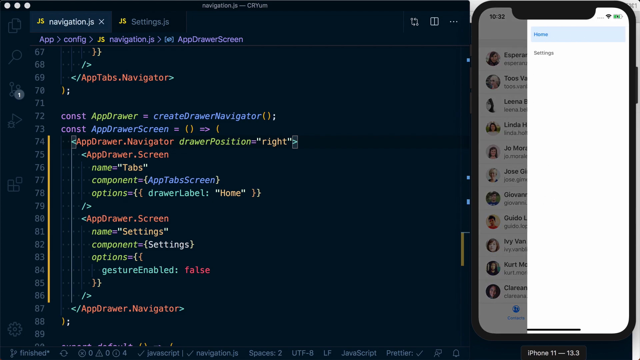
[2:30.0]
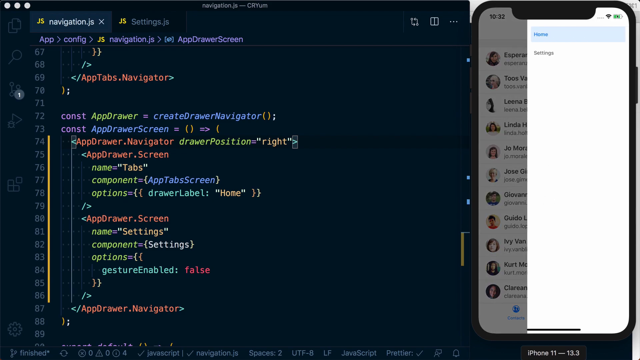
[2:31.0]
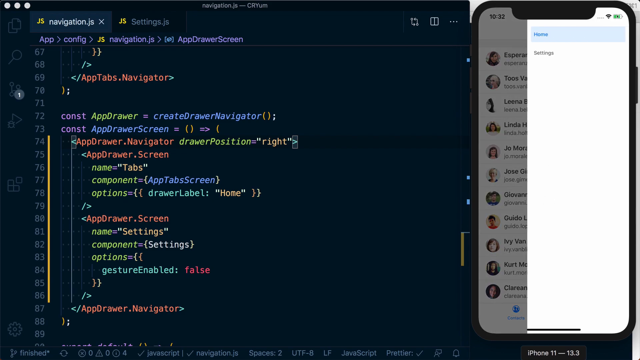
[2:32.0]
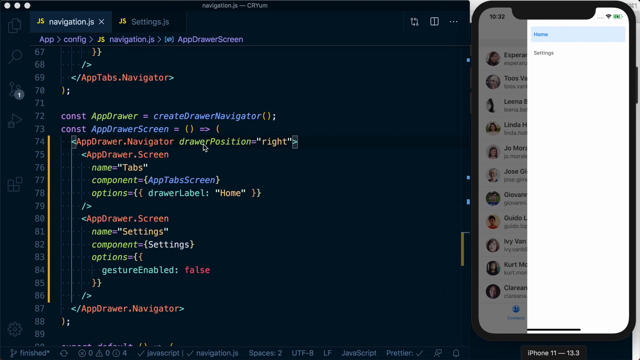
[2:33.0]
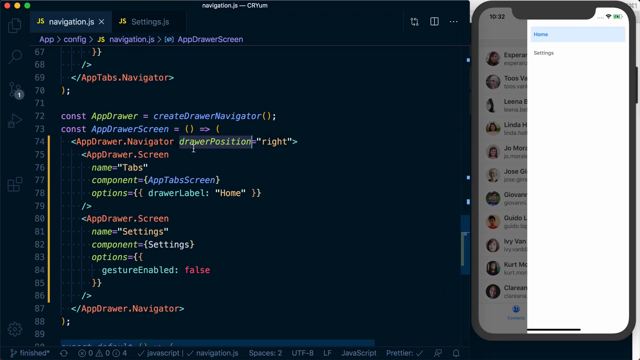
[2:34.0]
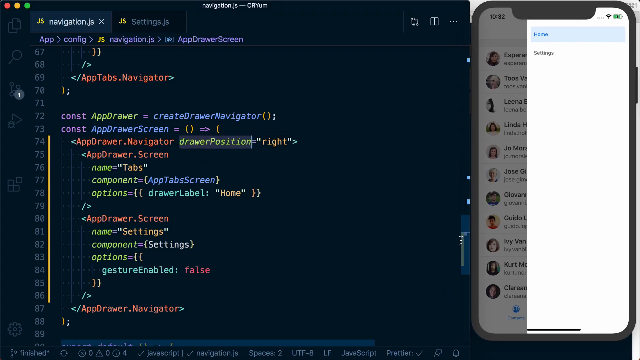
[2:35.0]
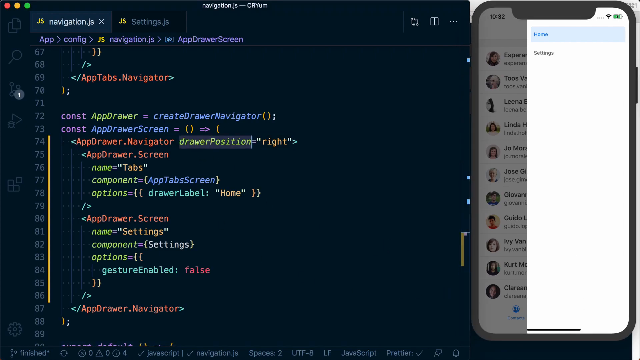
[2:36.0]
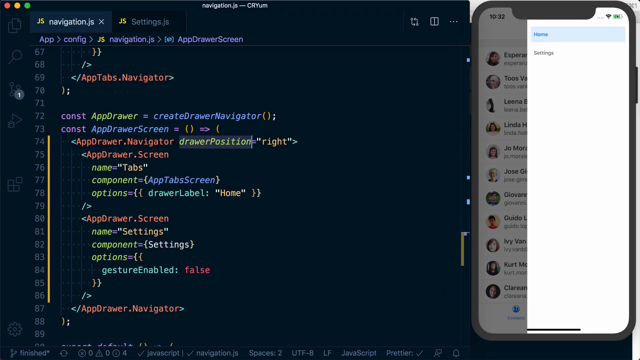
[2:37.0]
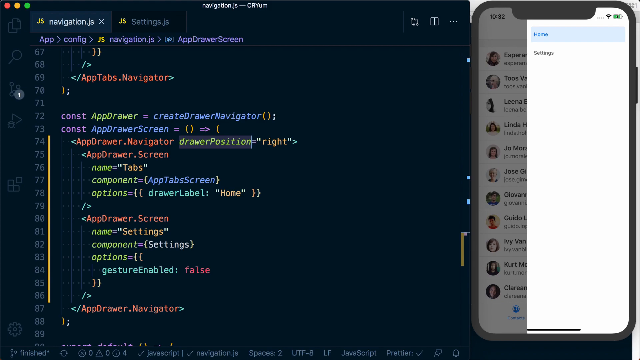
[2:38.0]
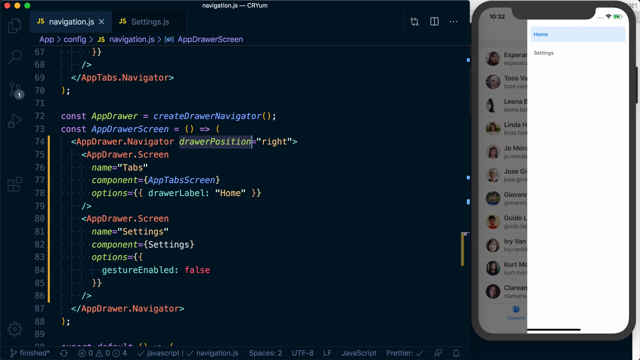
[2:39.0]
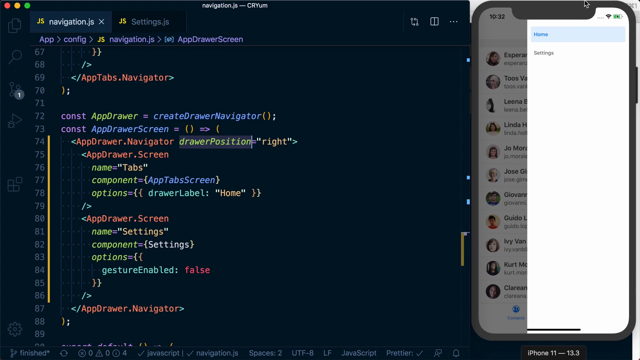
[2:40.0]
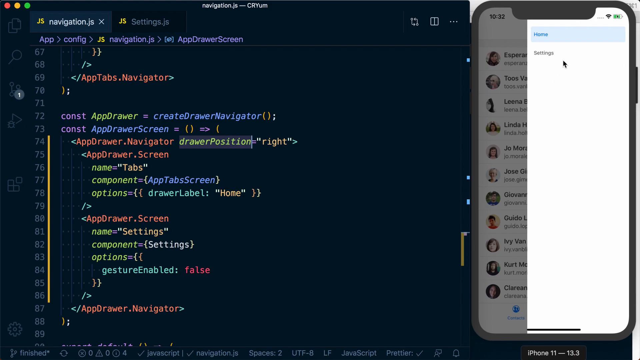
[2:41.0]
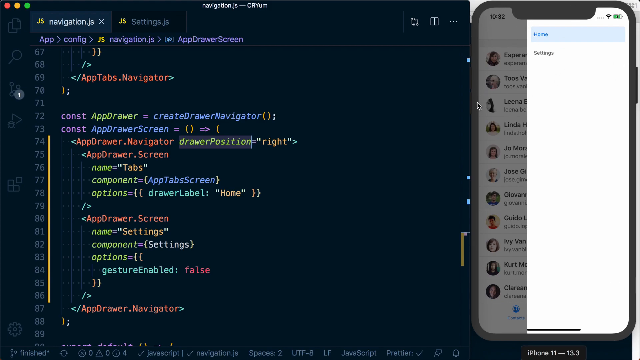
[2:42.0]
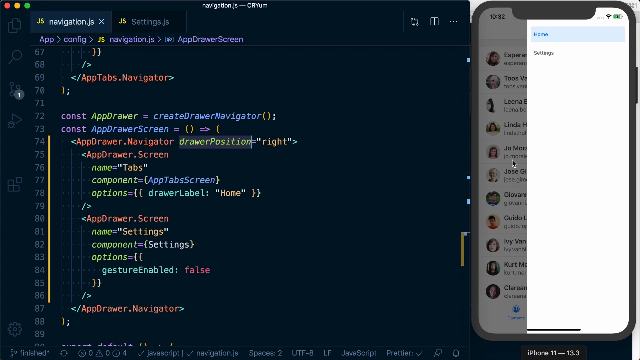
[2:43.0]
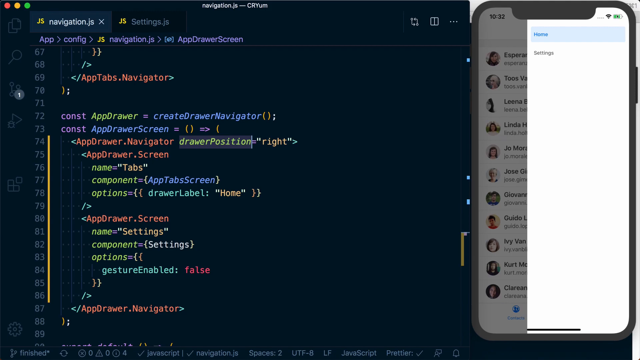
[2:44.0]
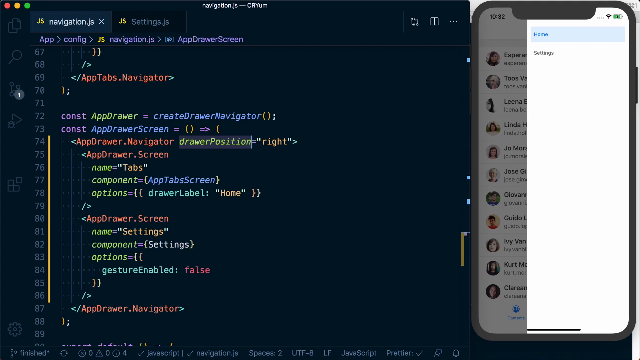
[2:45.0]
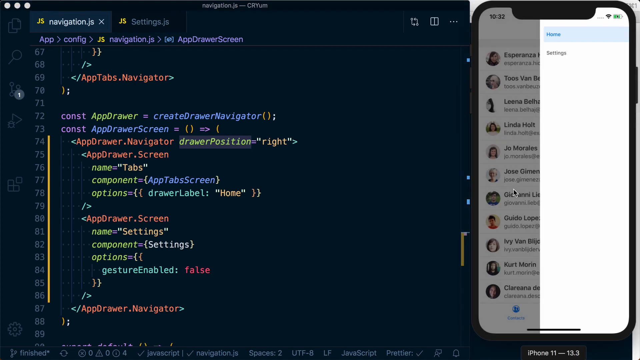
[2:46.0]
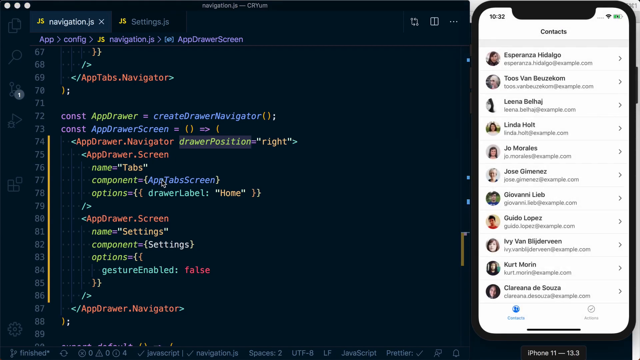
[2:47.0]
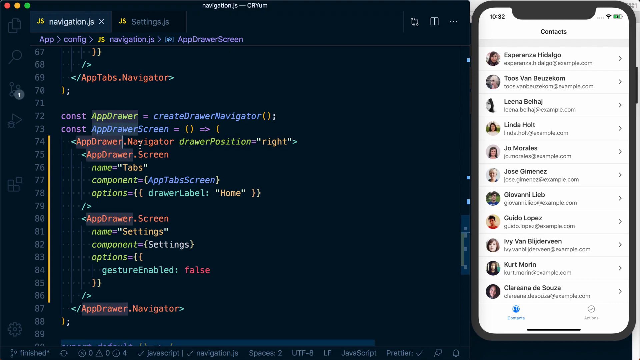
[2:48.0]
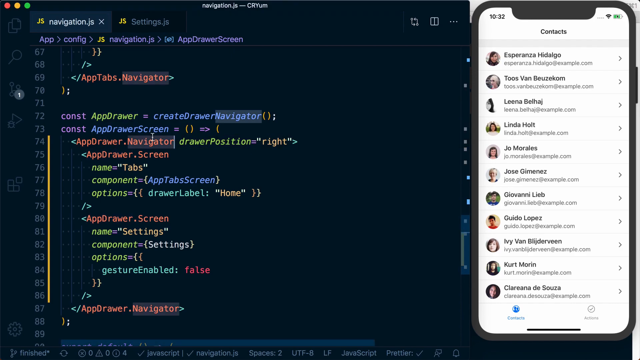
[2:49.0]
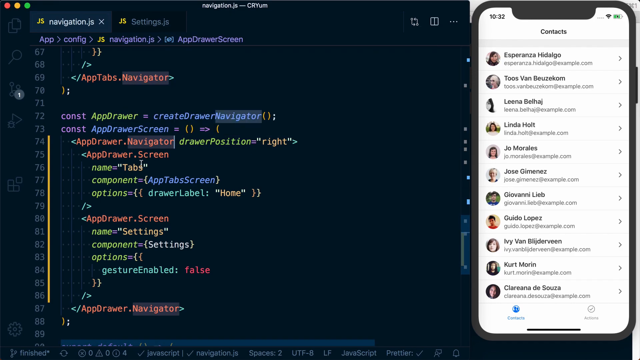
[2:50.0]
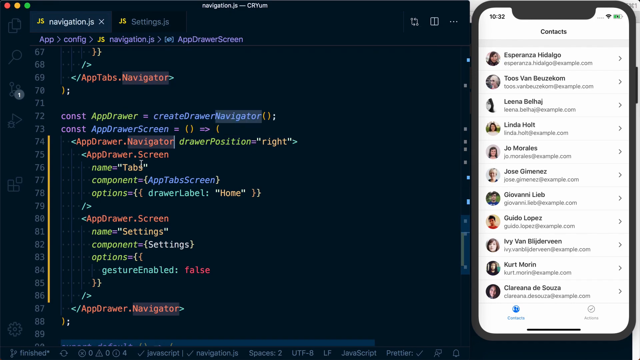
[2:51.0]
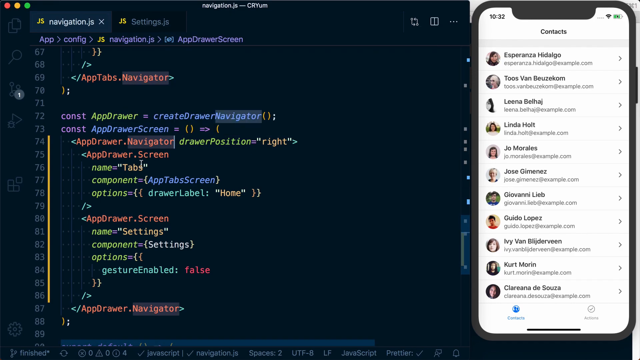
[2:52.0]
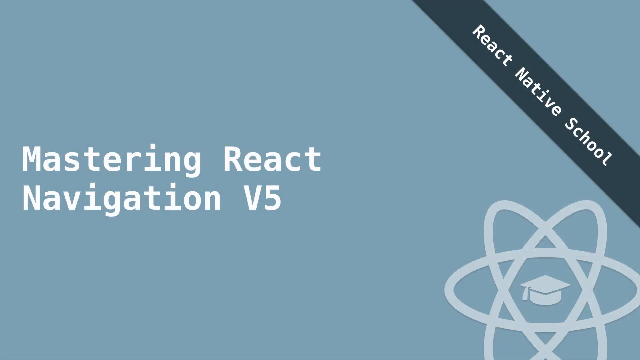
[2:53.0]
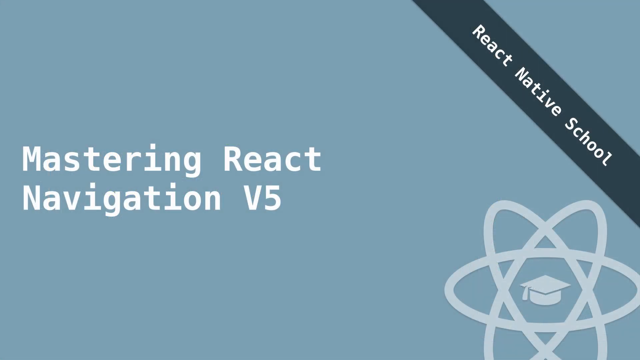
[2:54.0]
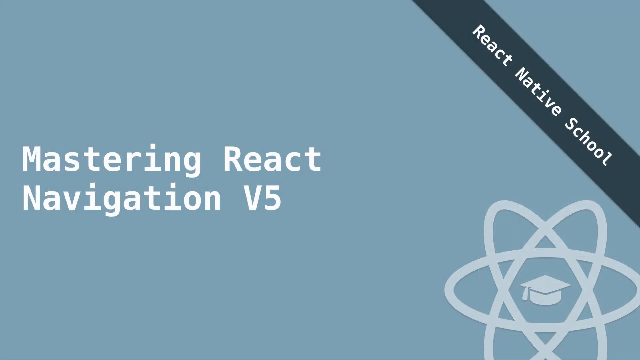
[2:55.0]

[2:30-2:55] Someone is recording their coding of something called navigation.js. The top of the screen reads "navigation.js-cr-yum", and the coding page is black with four font colors: purple, orange, blue and lime green. On the right-hand side is a picture of their phone, and the person toggles between the contacts and a drag-out menu reading "Home" and "Settings". The cursor moves over to drawer position in the code, which highlights, then goes back over to the phone, back to contacts, and back to the code, where a bunch of text highlights that is not wanted. The video then returns to the cover titled "Mastering React Navigation V5", with a banner in the corner reading "React Native School" and, in the lower right corner, the symbol of nuclear energy with a mortarboard in the middle.